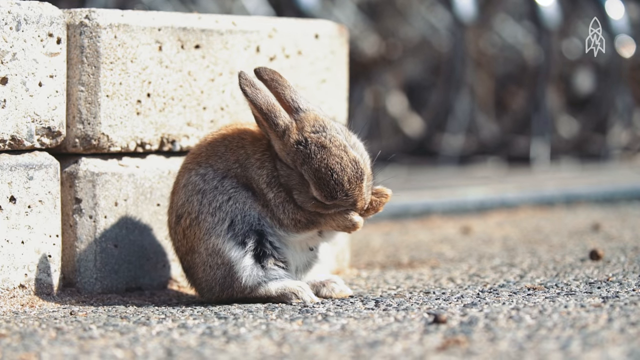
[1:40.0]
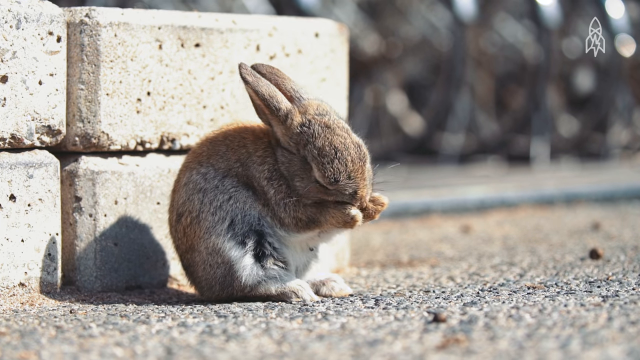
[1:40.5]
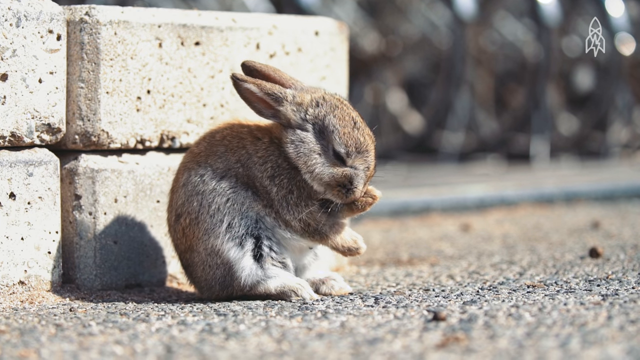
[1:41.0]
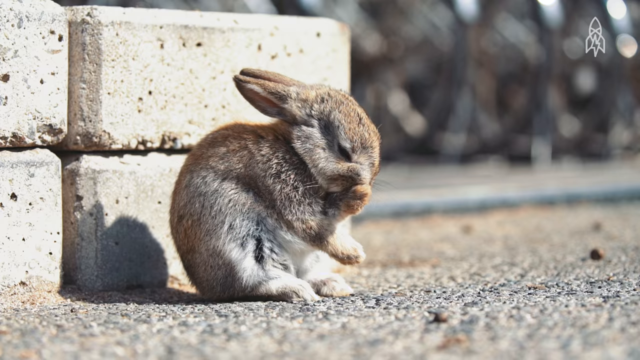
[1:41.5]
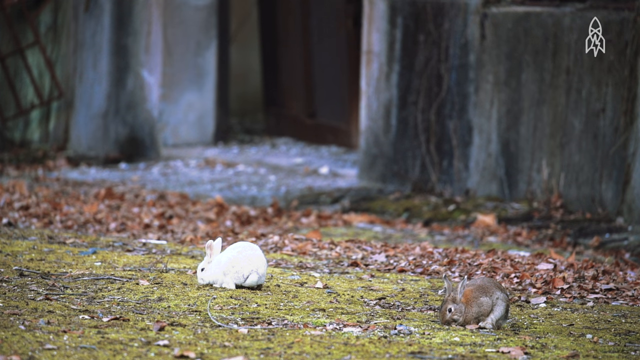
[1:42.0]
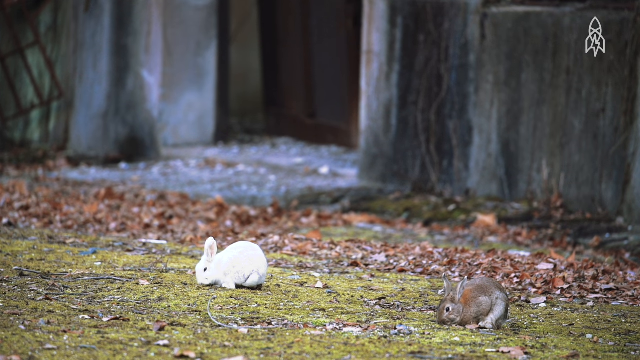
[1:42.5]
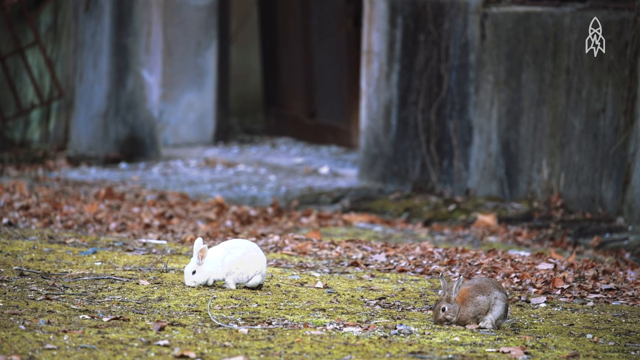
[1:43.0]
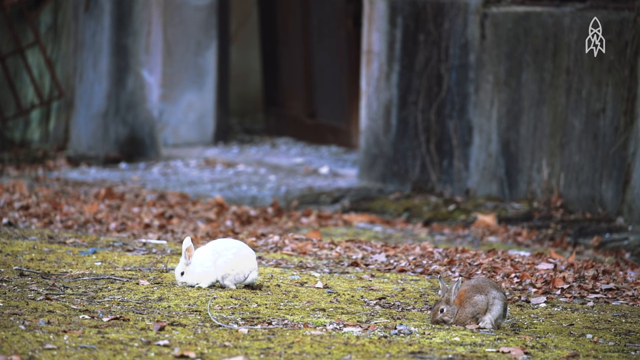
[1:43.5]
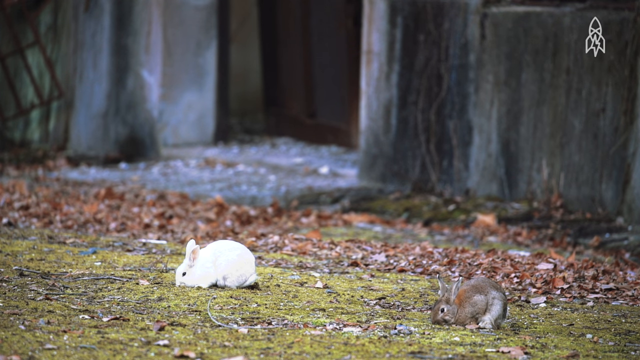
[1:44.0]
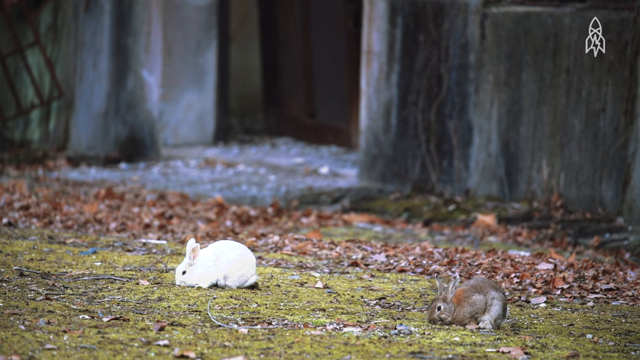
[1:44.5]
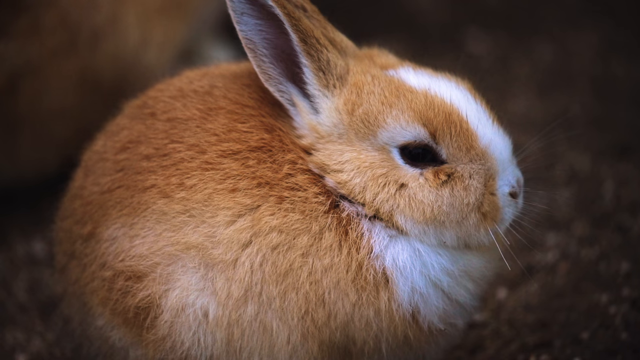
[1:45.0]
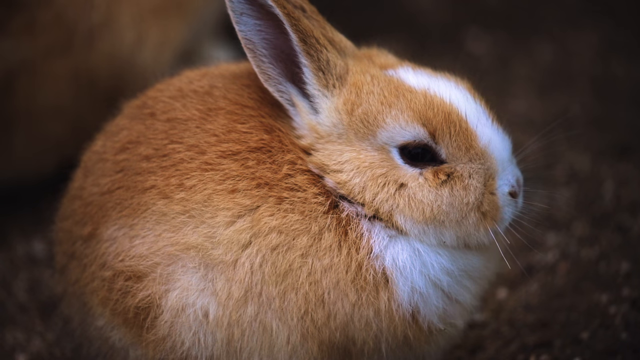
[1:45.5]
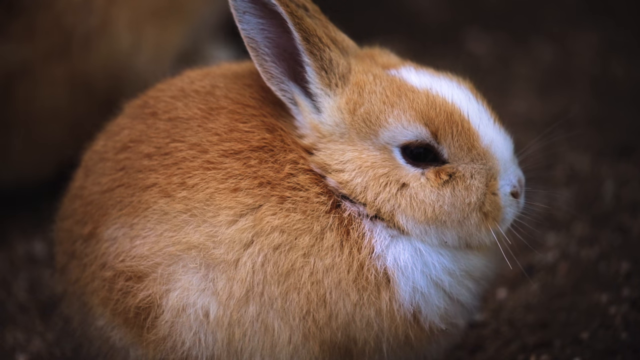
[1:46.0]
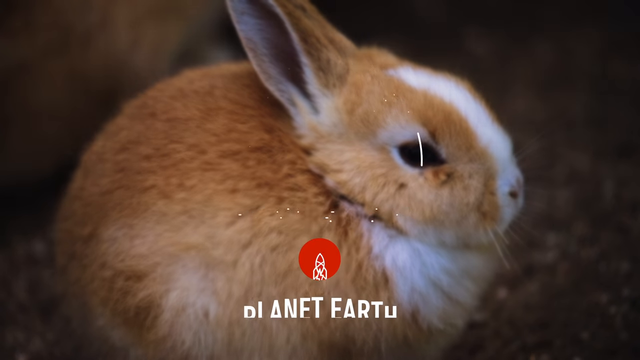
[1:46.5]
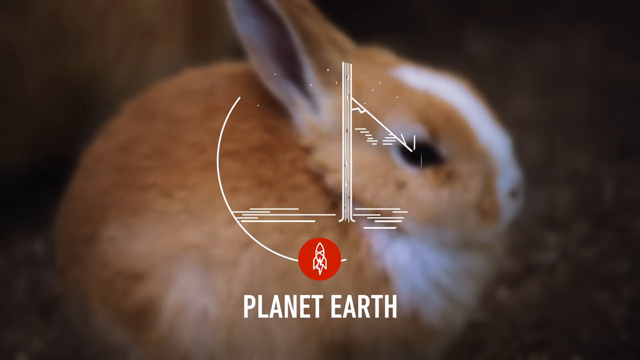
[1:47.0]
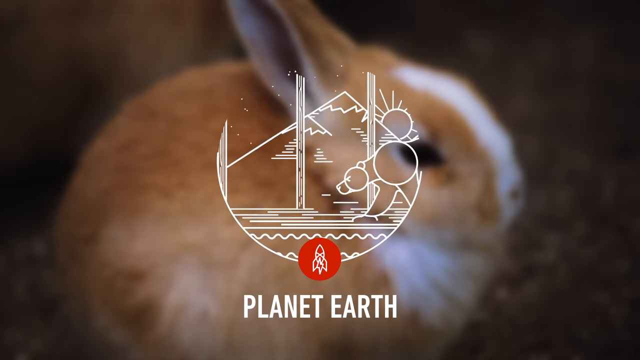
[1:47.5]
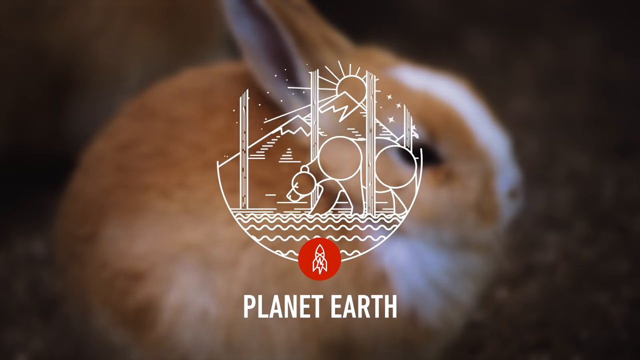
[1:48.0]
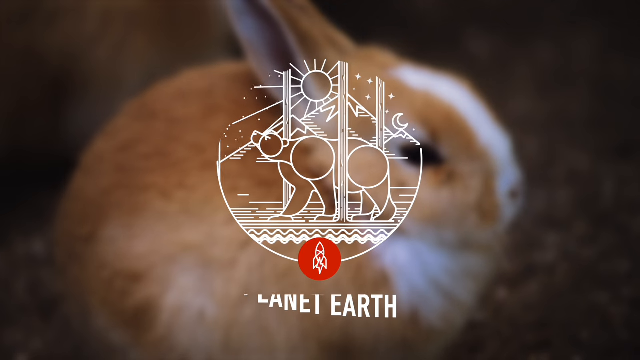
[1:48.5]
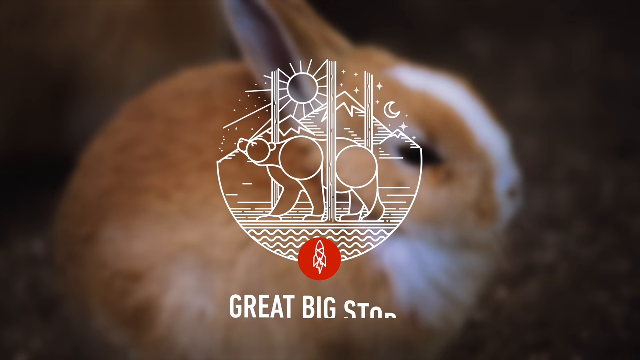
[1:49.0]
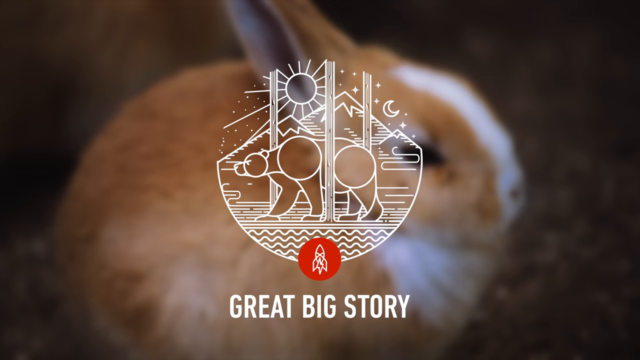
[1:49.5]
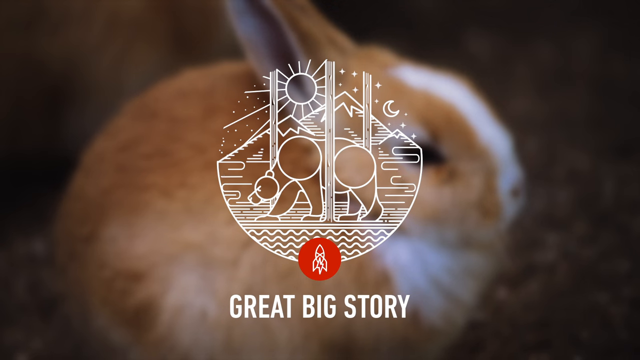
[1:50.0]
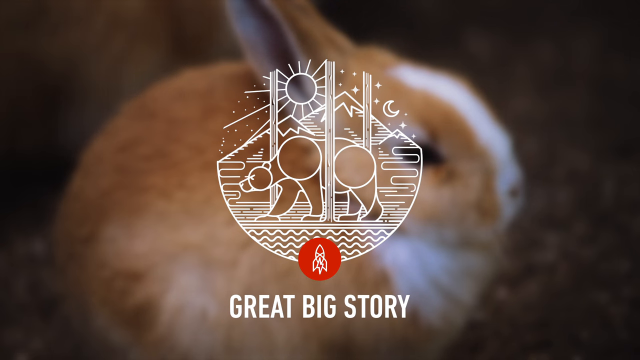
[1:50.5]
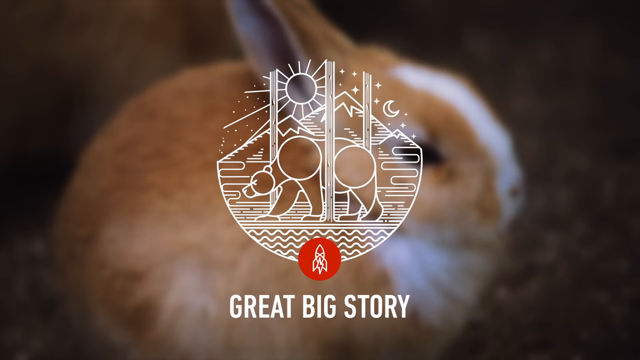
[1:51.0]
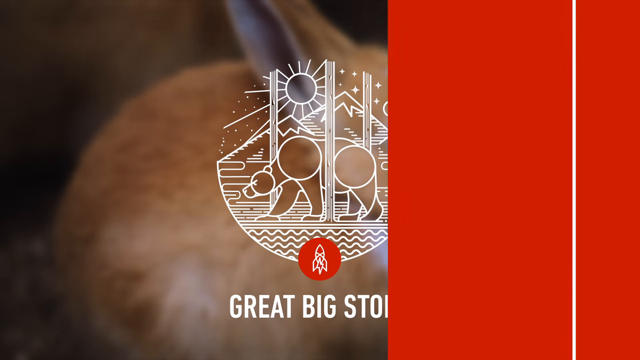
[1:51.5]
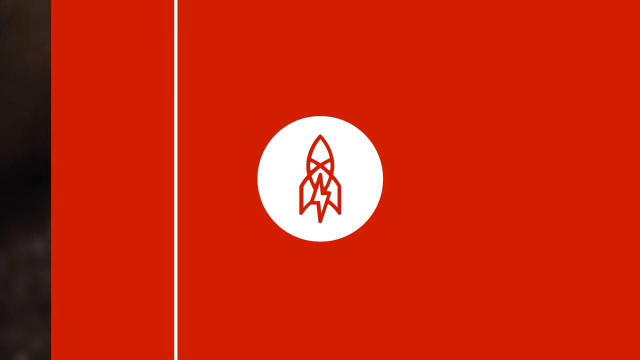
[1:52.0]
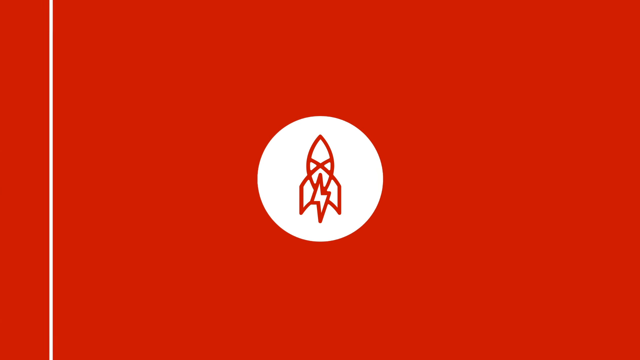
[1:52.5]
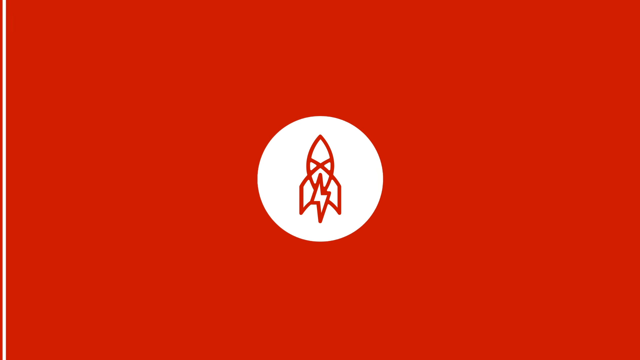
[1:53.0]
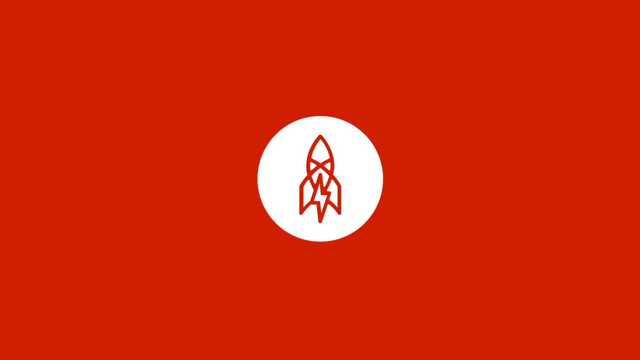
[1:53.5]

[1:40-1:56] Rabbits are nibbling on something. A rabbit nibbles on its hand, with a couple of blocks behind it. Briefly, a white rabbit and a brown rabbit are on the grass, both eating and nibbling on the ground. In the background of the grassy area is a building that looks abandoned, and there are a lot of dry leaves around.